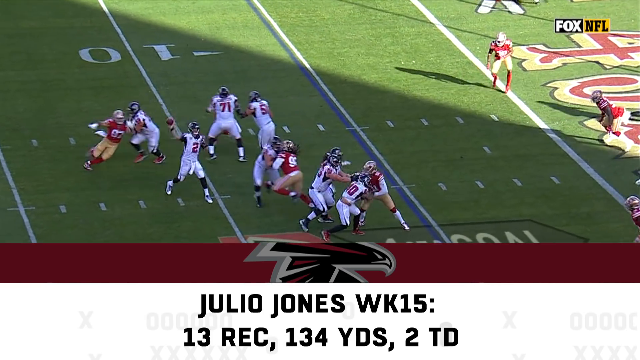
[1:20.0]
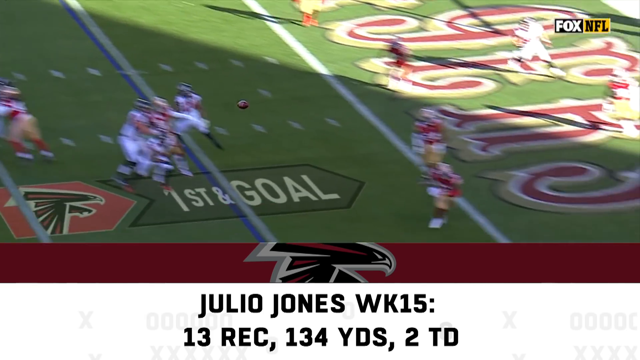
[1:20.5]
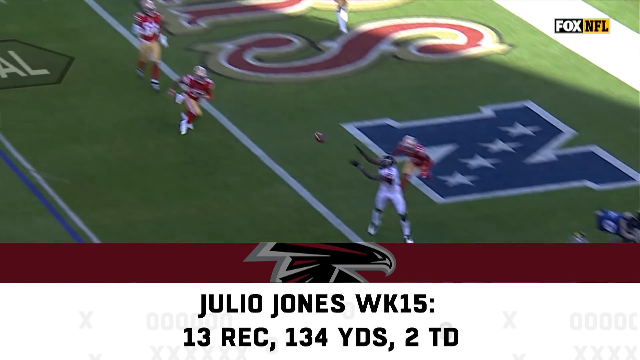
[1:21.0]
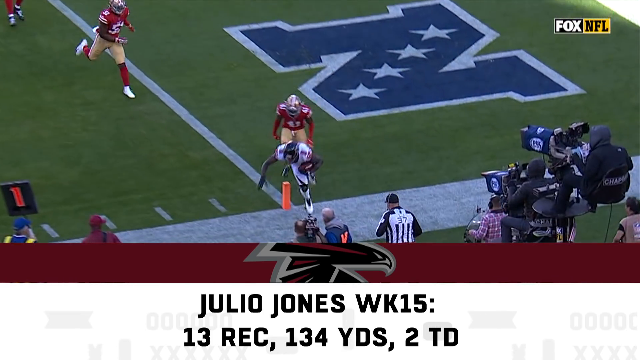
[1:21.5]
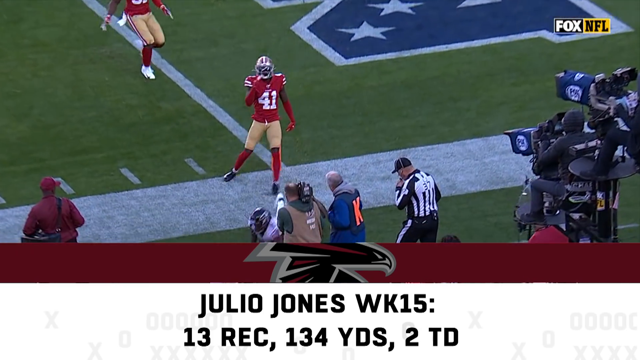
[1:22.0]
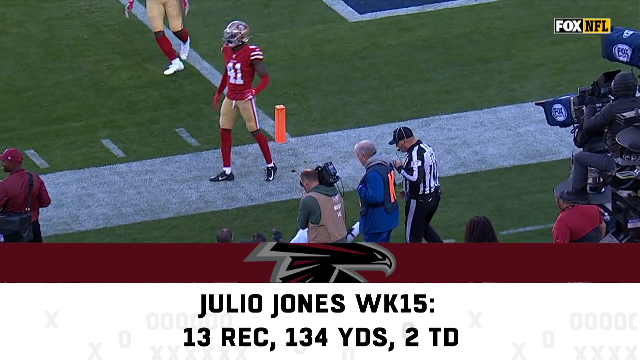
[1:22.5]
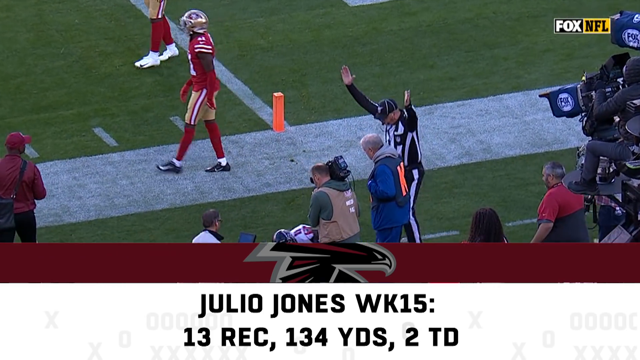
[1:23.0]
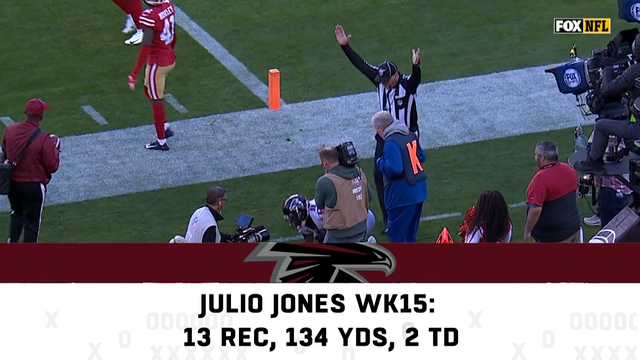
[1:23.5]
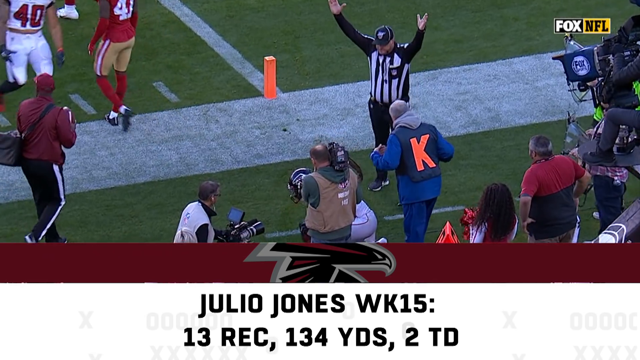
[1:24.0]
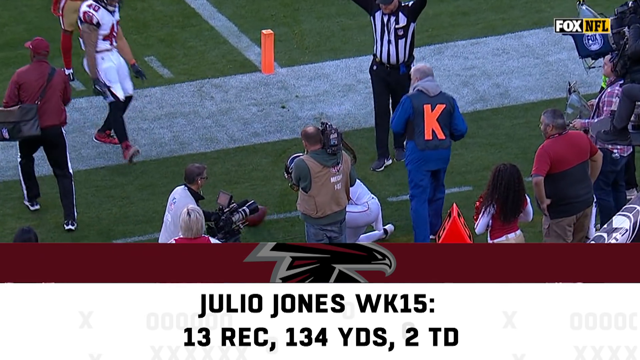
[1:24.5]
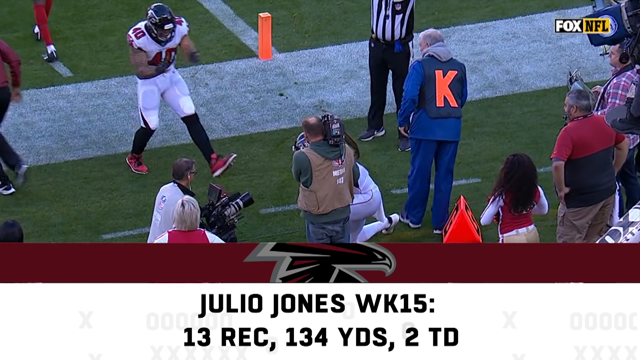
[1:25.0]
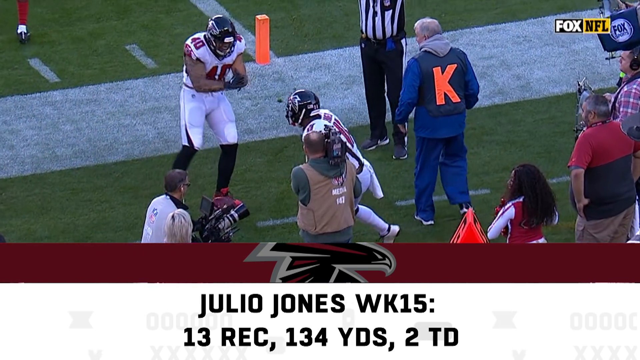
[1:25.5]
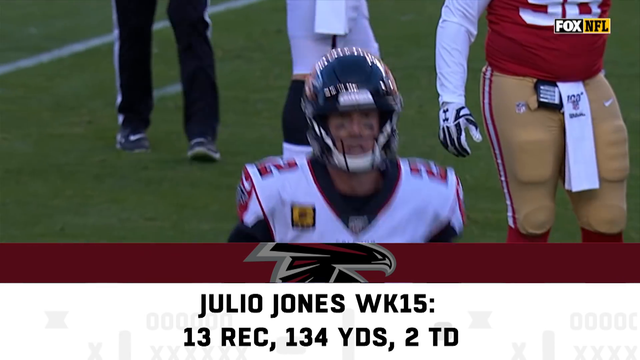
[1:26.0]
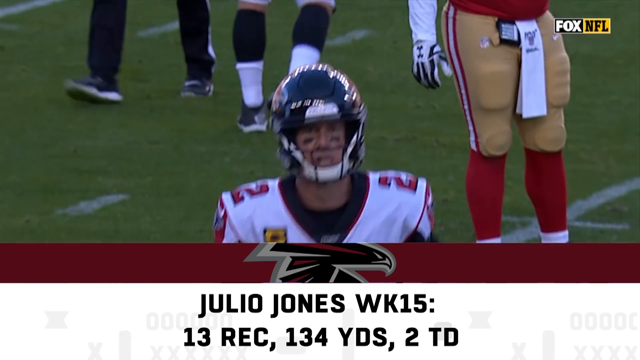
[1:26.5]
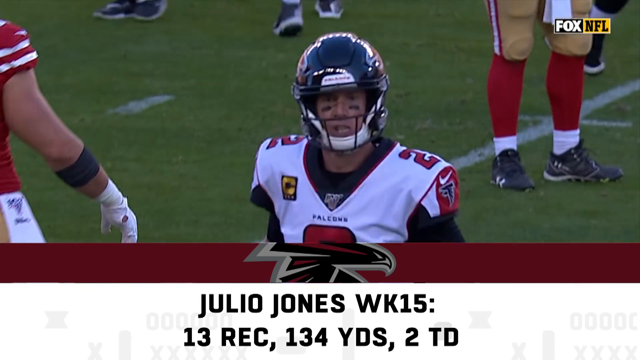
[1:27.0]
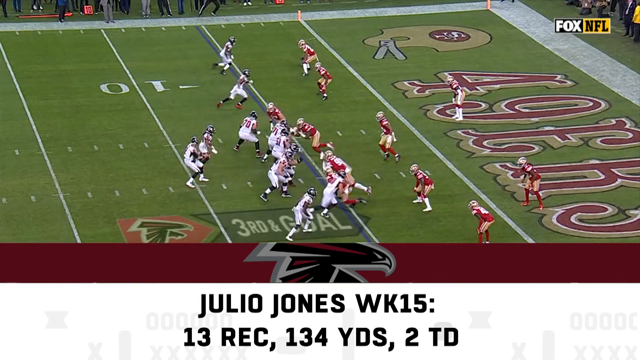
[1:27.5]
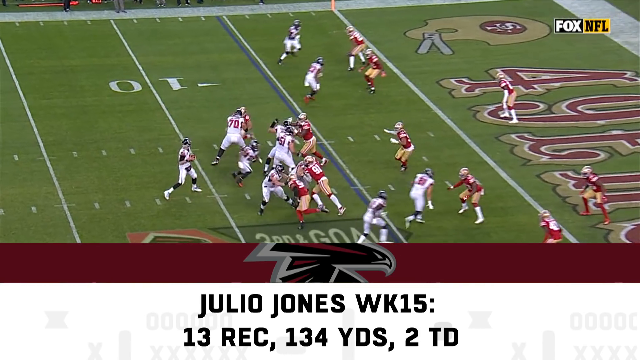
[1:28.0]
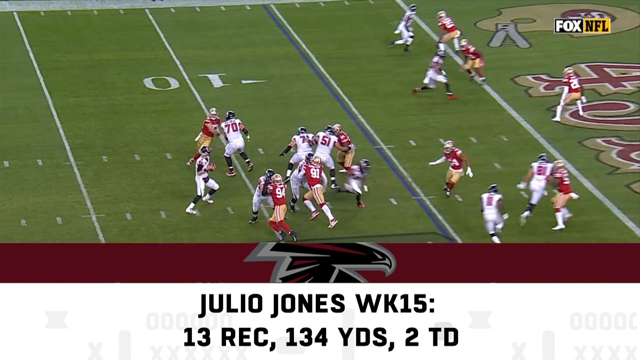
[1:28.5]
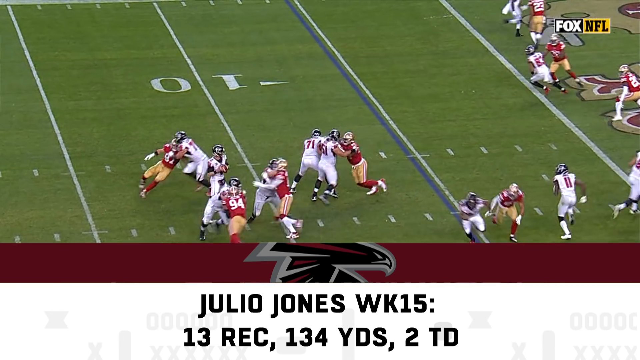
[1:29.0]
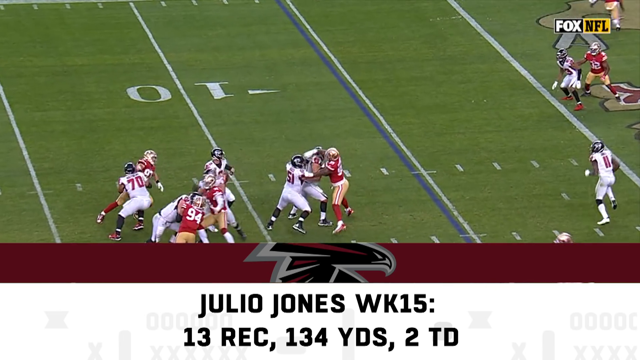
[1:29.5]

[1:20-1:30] A stat shows that Julio Jones has caught 13 passes for 134 yards and scored two touchdowns. Atlanta completes a pass to a receiver, not covered tightly, who catches the ball right at the entrance to the end zone for a touchdown, and the quarterback runs off the pitch looking very happy. On another Atlanta touchdown opportunity, the quarterback looks into the end zone, avoids a heavy pass rush, and the ball sails into the end zone, where it looks as though a receiver is going to catch it.